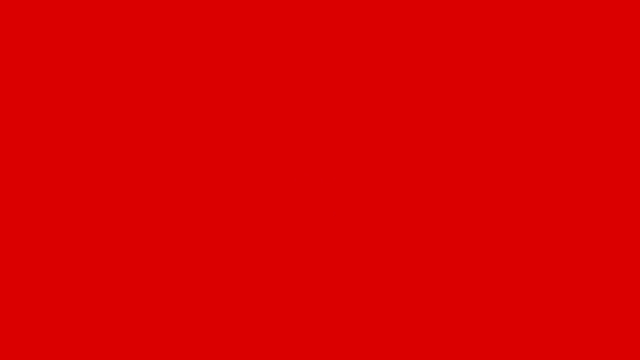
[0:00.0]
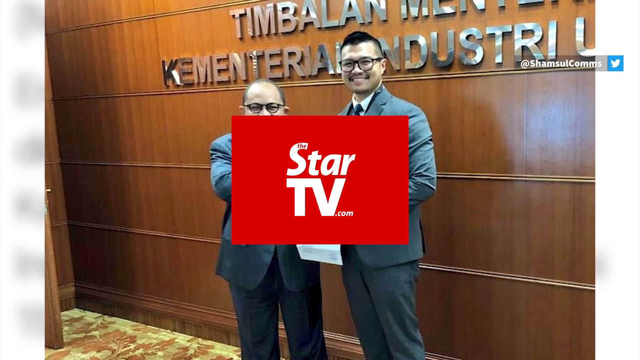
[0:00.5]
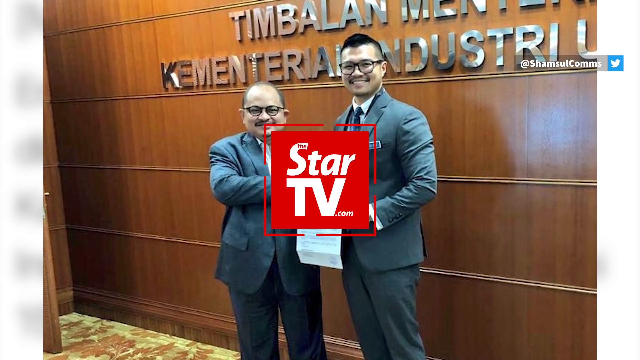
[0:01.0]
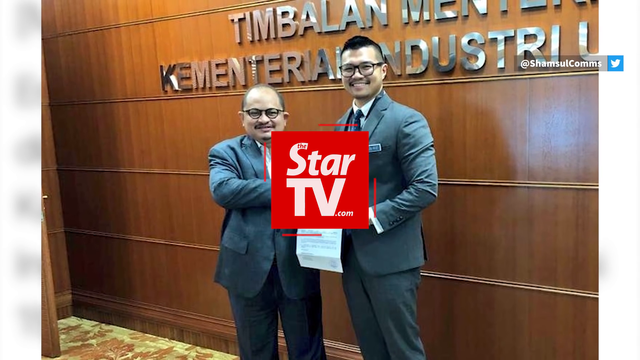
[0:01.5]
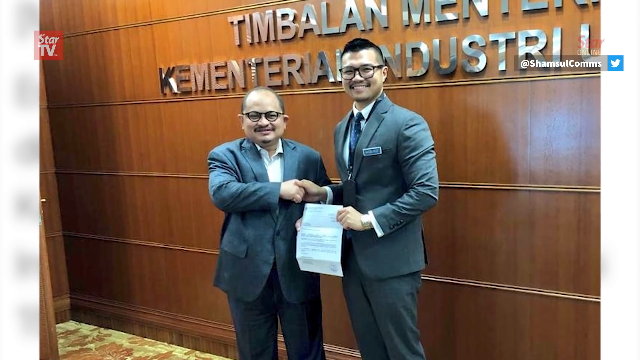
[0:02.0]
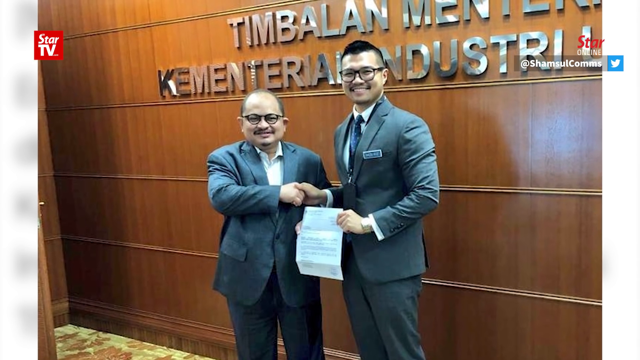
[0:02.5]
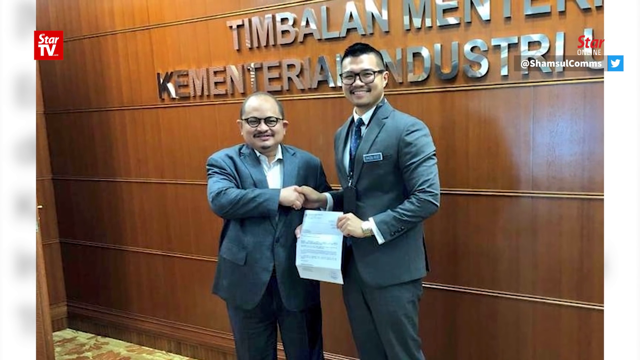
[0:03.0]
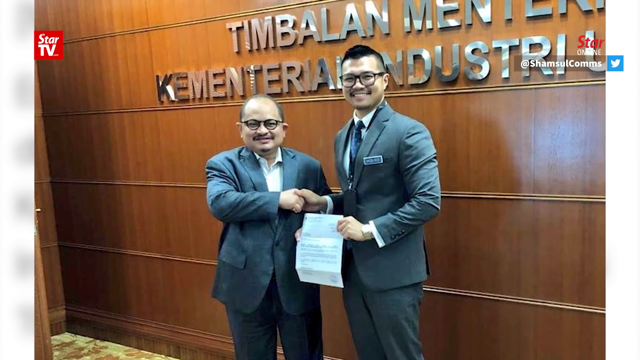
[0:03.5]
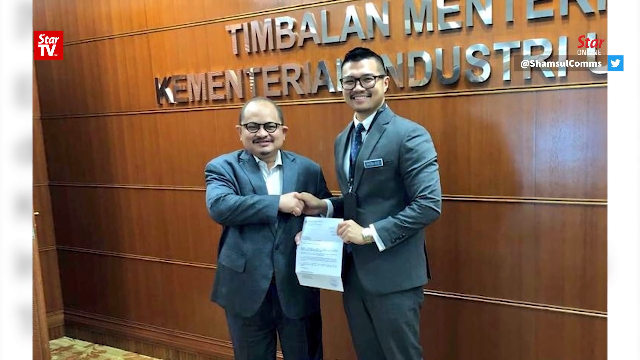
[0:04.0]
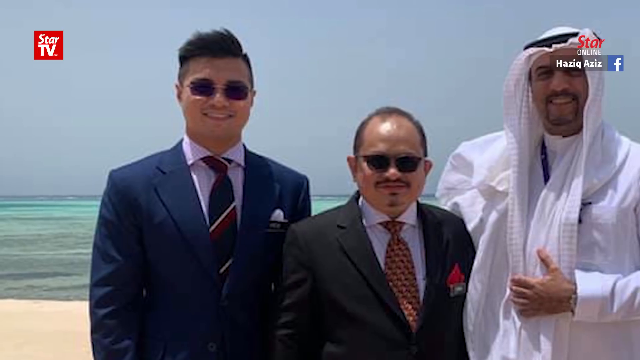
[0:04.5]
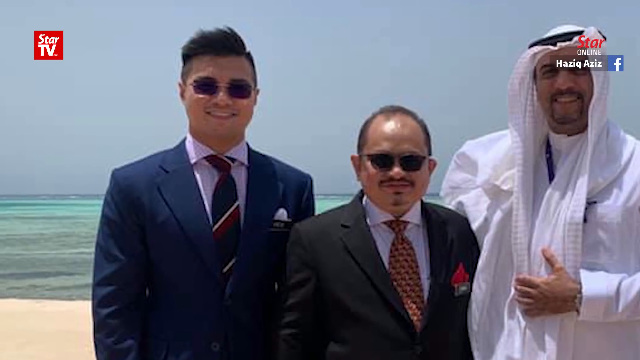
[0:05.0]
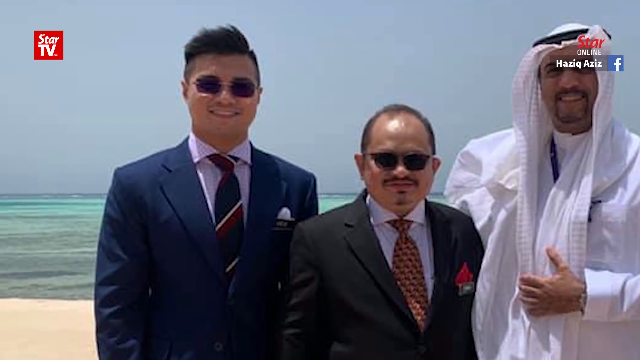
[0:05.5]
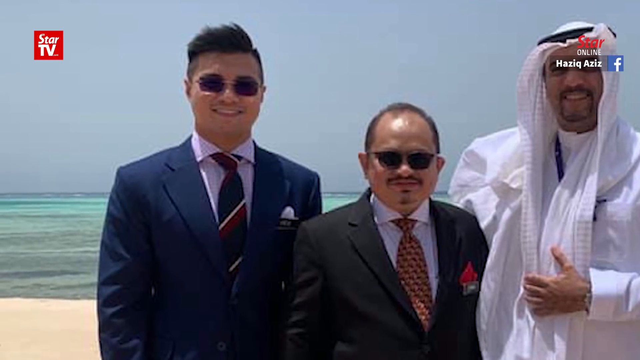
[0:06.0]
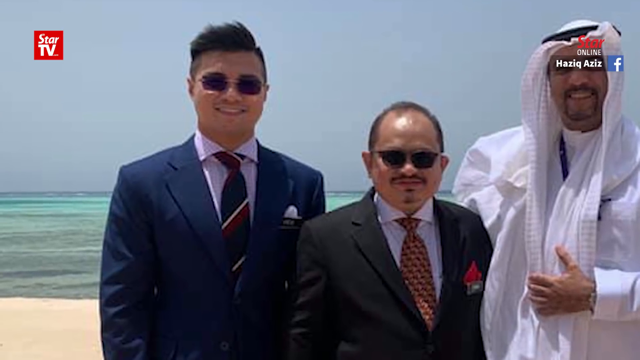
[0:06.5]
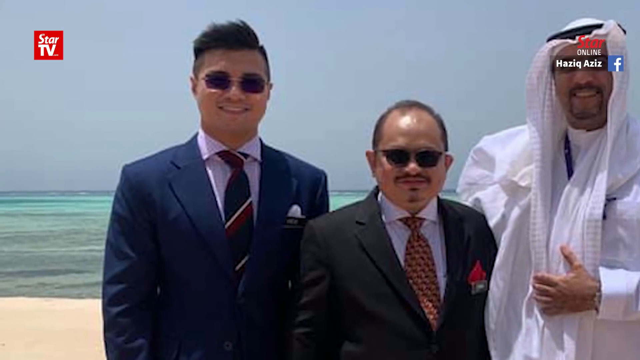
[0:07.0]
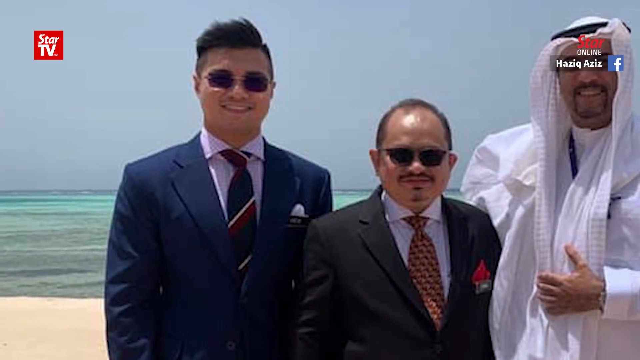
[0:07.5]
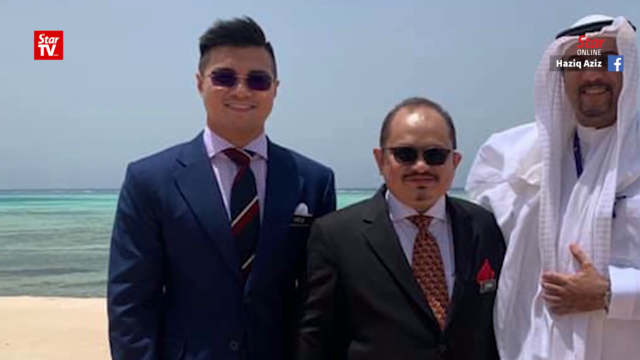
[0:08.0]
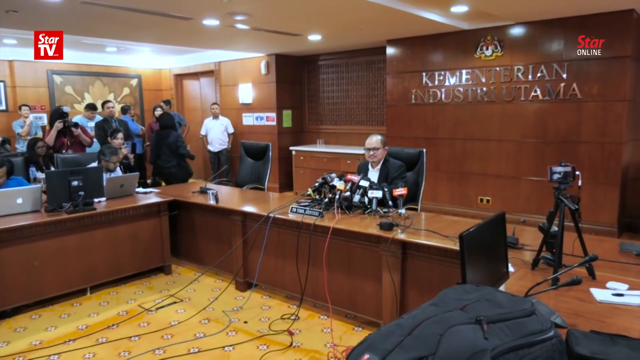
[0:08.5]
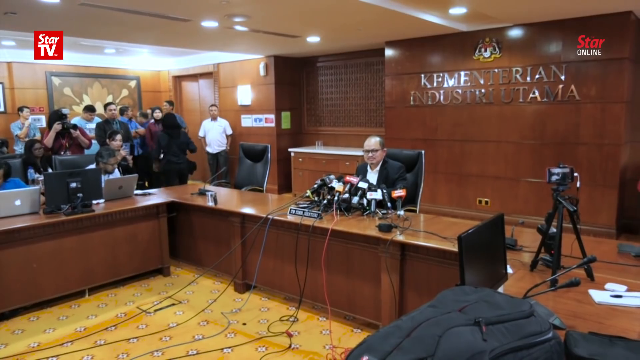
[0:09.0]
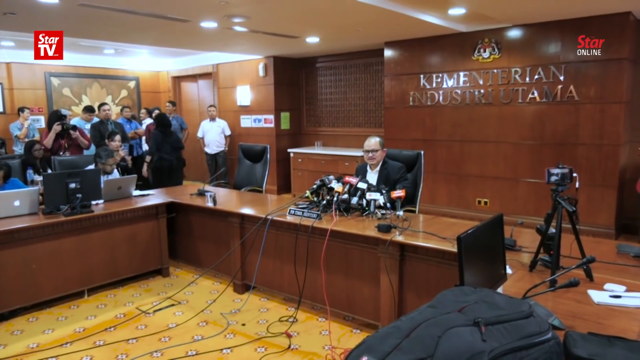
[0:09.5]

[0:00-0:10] The video opens with the Star TV logo. Two men, possibly Asian or Hispanic, shake hands and smile. Text on the wall in the background apparently reads something like "Timberland Minterra Commentarial Industrial"; the signage uses the English alphabet. Next comes a shot of the same two men in suits and sunglasses, standing with a Saudi prince on a beach. The video then goes to a red screen.